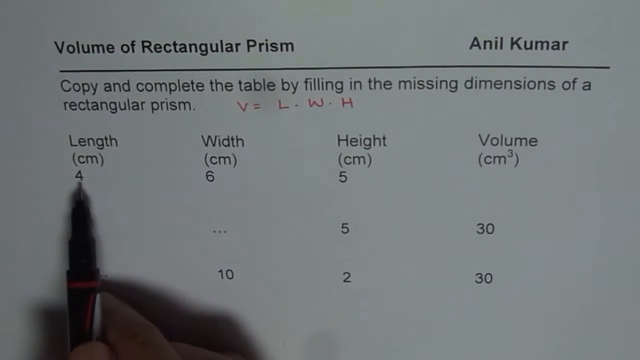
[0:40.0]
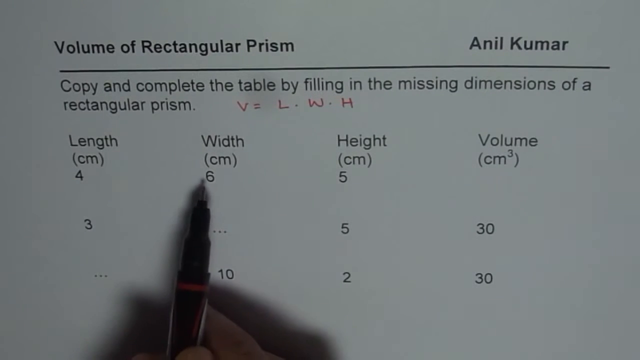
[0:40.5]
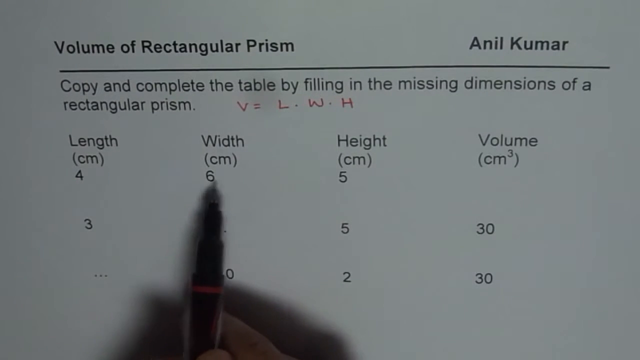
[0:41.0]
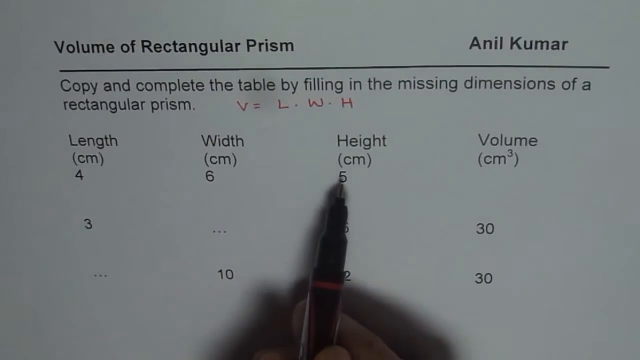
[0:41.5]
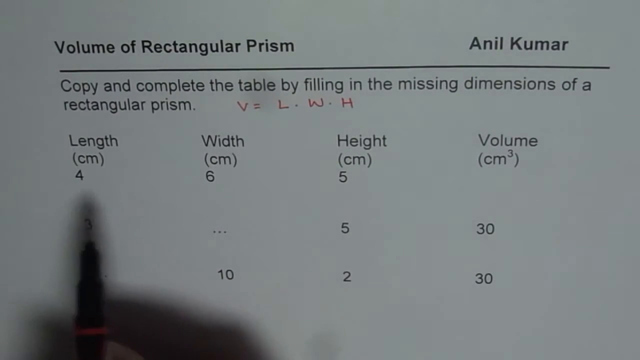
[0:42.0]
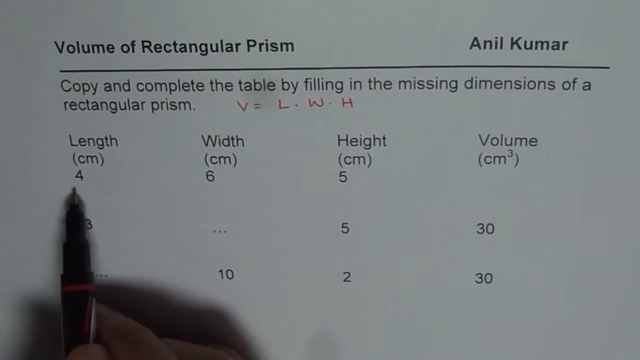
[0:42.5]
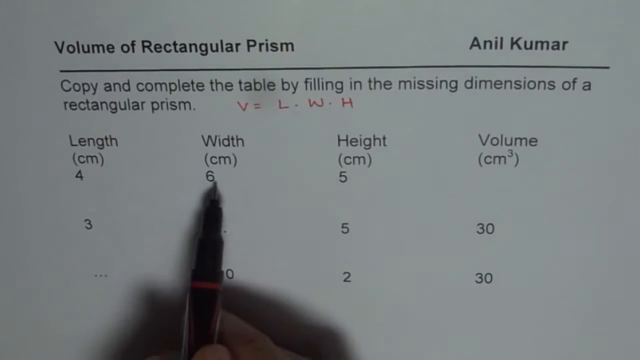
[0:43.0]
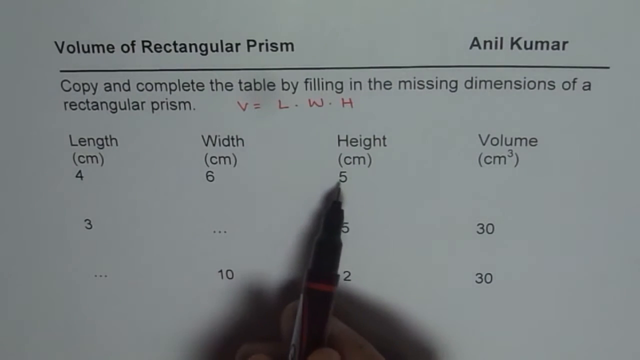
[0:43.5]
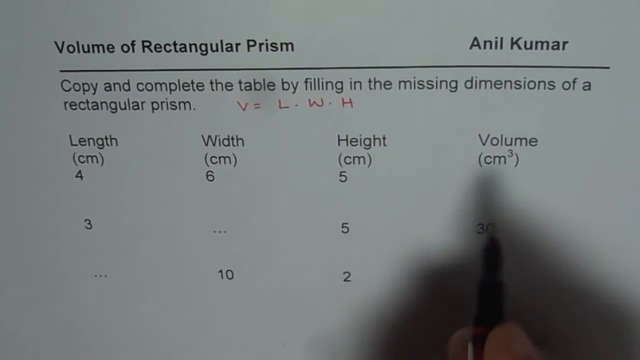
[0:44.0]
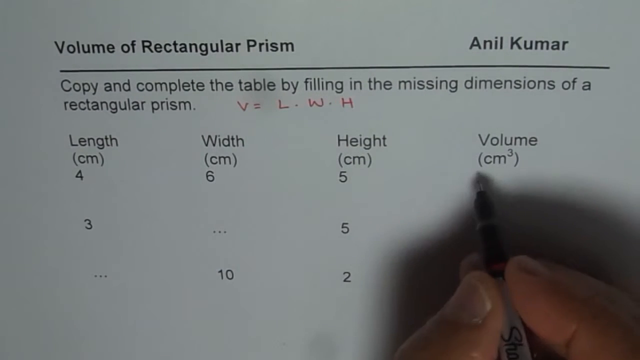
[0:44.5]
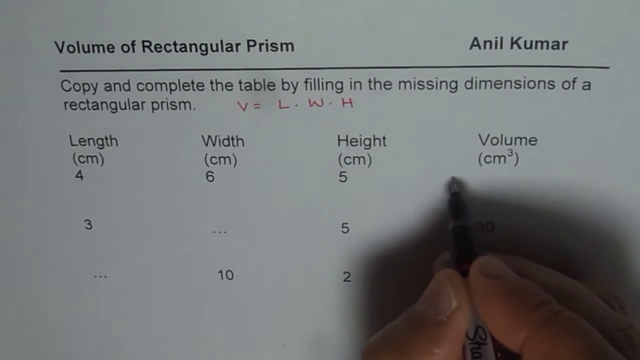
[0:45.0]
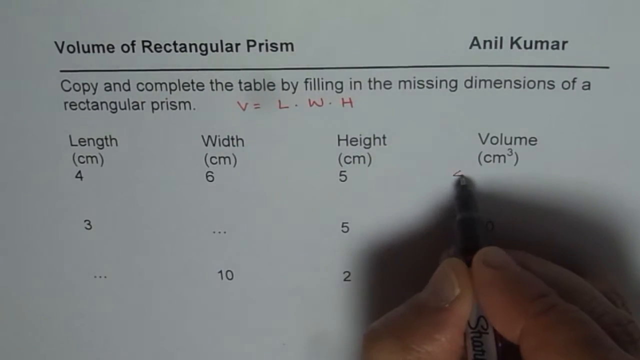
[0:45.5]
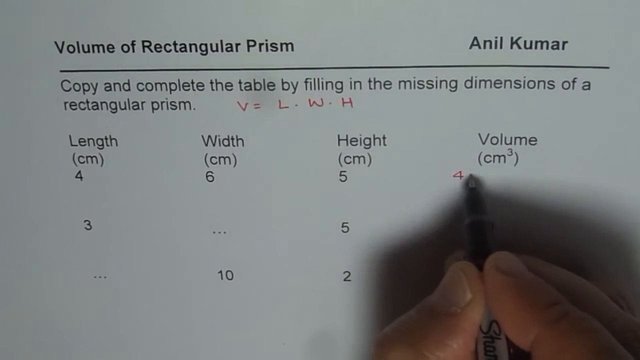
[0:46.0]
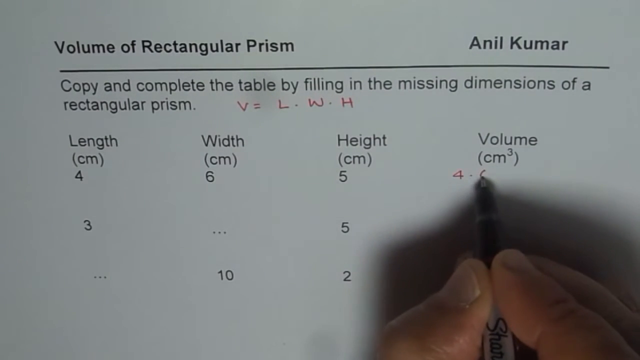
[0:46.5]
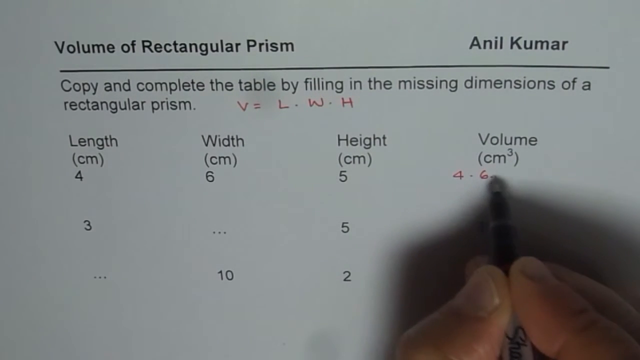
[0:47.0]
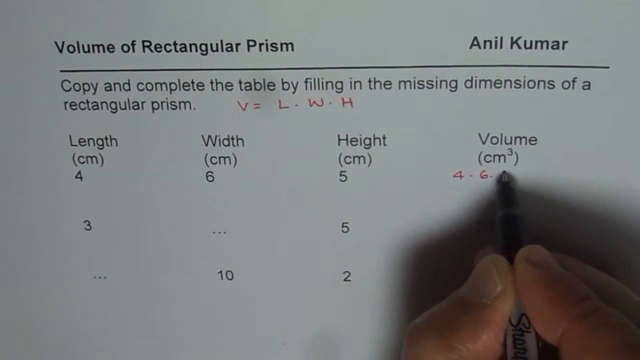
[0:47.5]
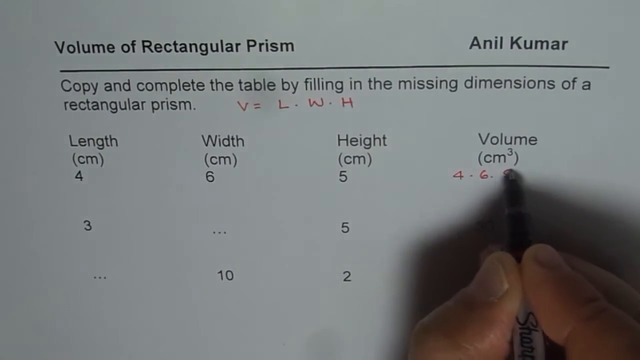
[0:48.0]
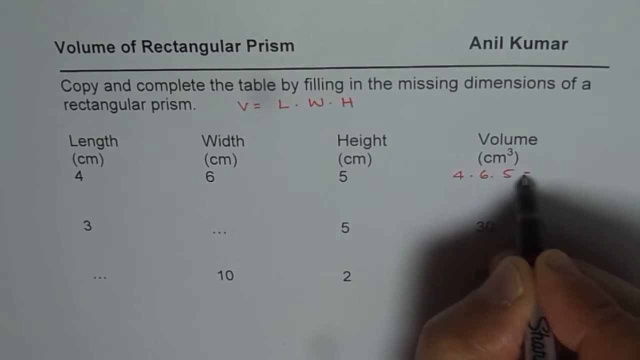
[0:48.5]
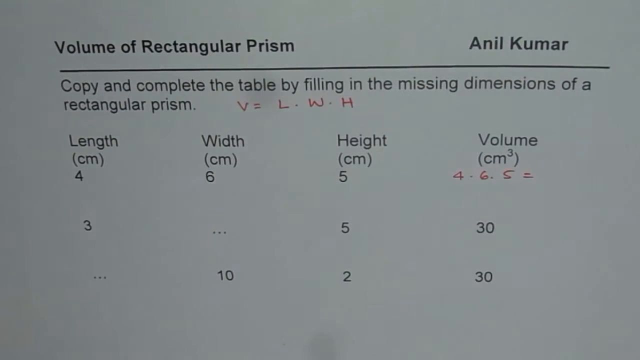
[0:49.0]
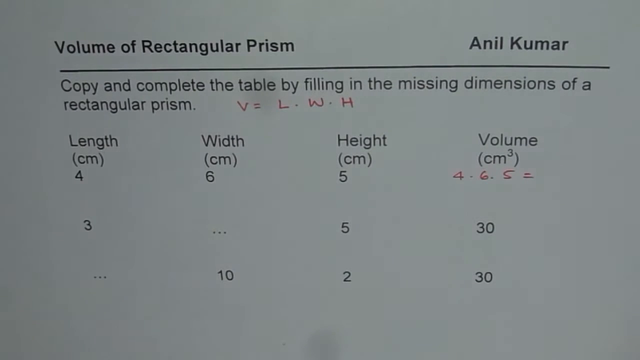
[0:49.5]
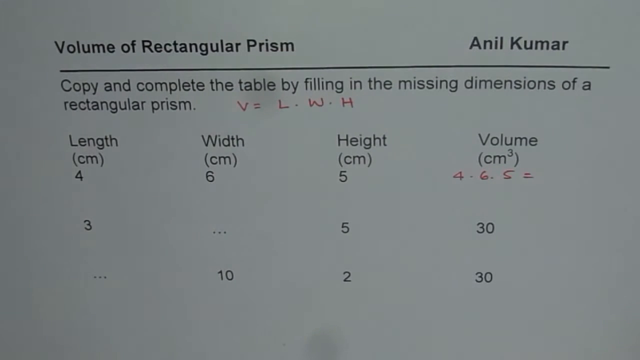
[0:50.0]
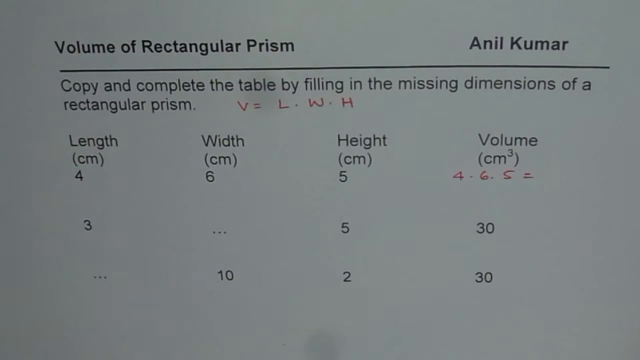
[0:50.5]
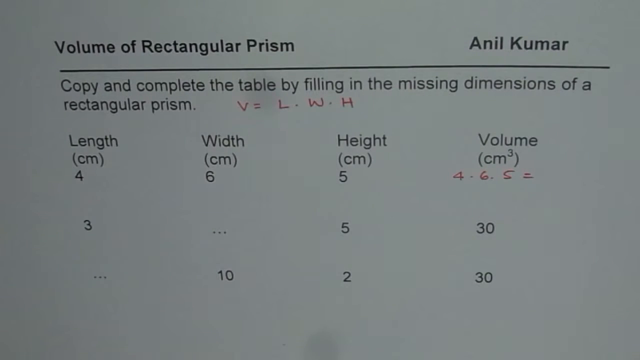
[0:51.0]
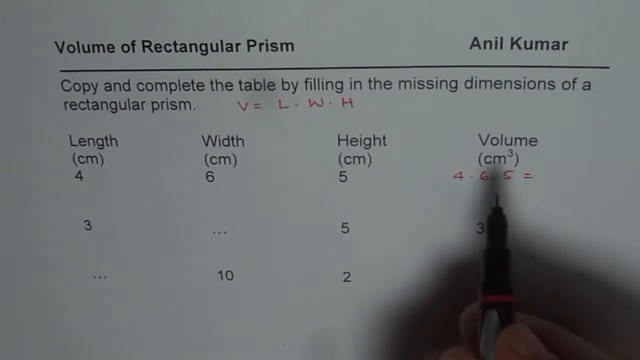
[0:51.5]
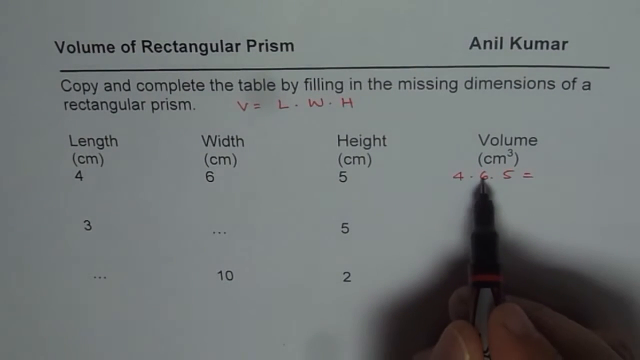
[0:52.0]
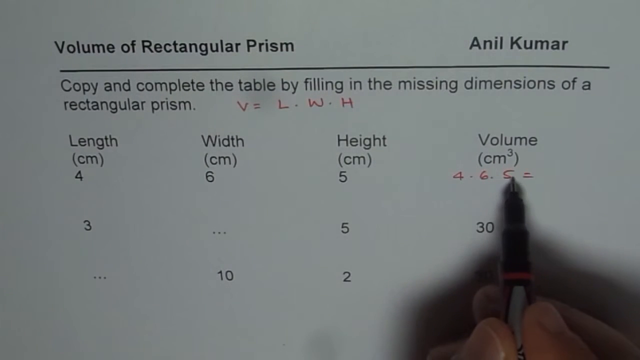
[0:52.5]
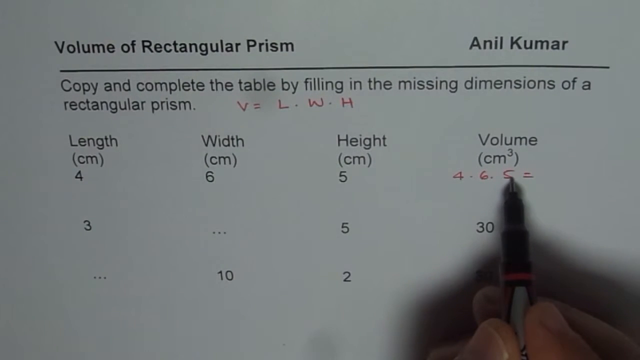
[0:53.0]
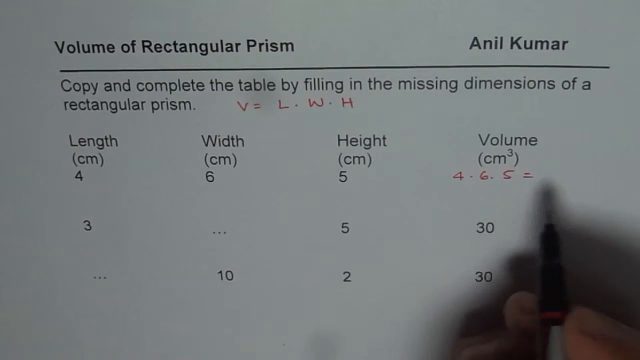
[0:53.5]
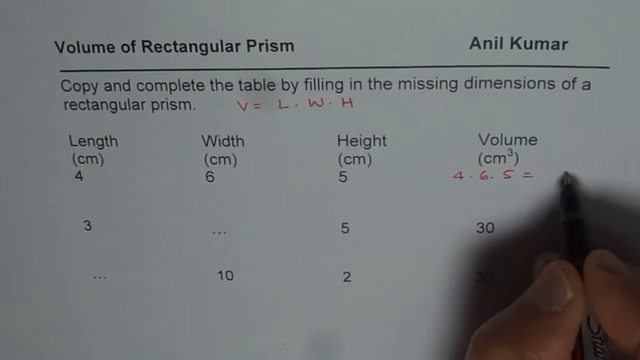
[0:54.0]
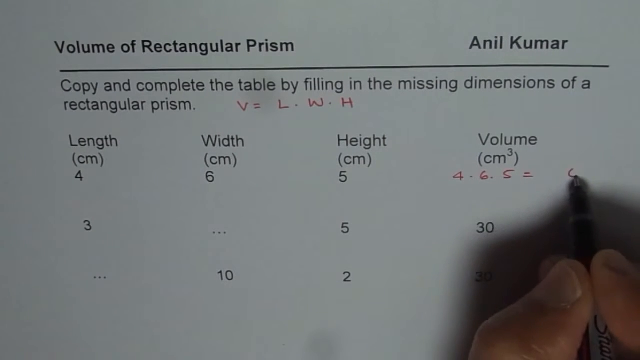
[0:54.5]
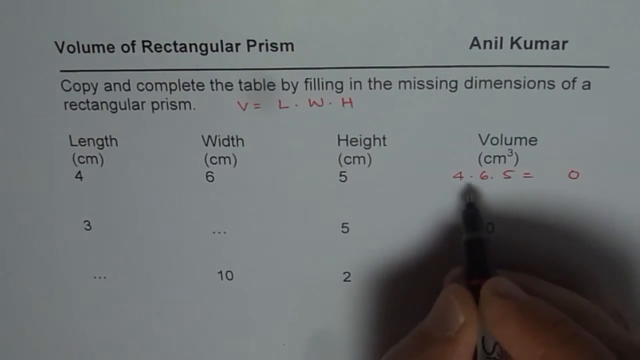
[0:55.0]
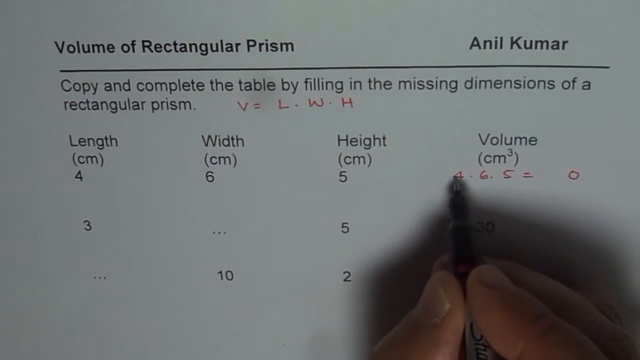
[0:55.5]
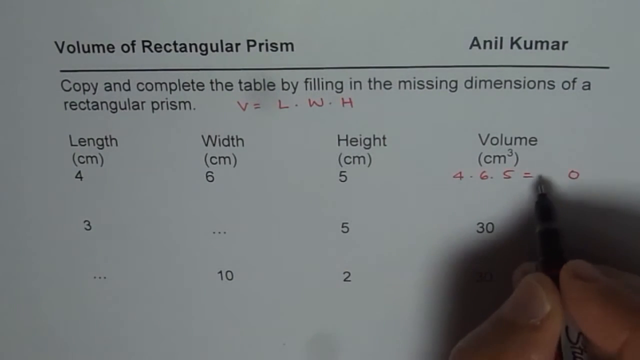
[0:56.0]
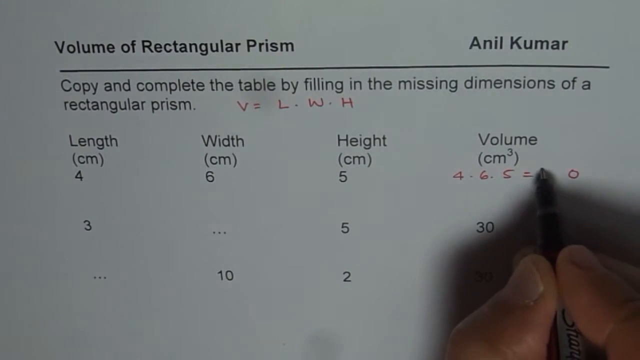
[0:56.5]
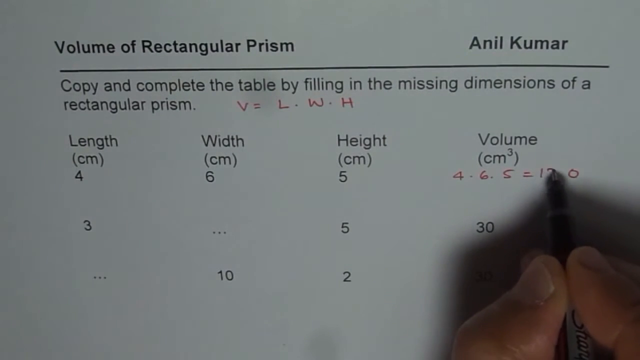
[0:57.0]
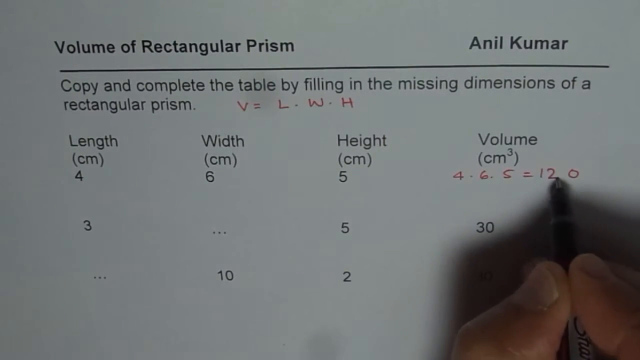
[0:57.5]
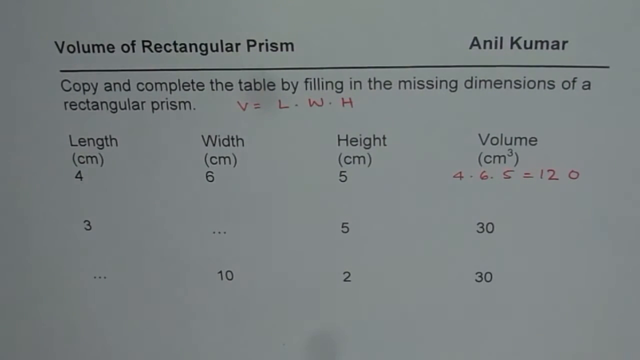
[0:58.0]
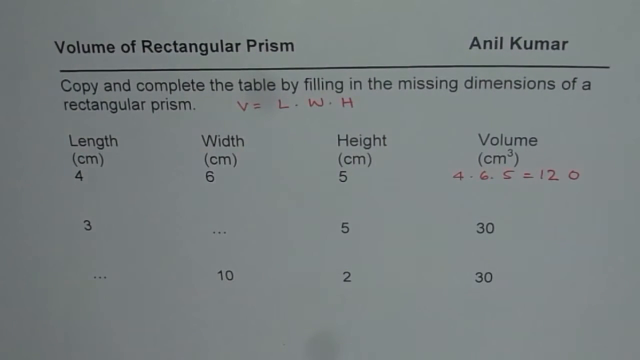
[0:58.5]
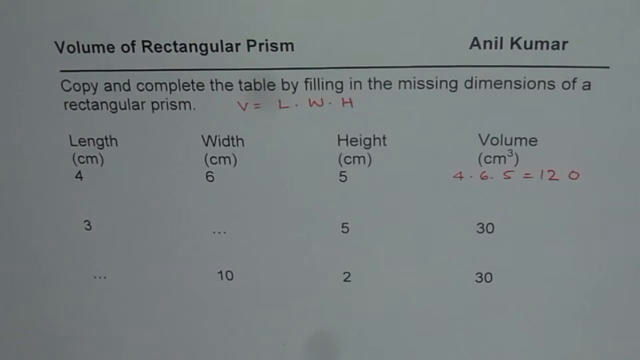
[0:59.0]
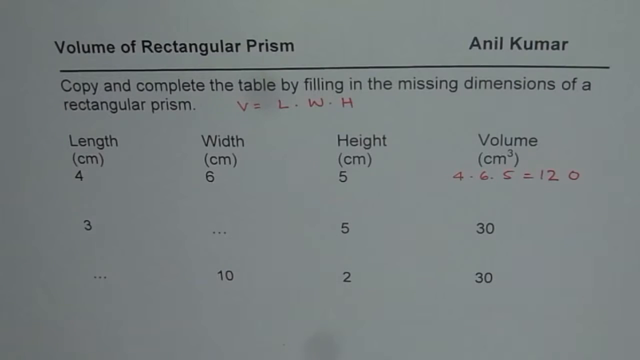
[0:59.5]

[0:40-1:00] The person's hand is in the bottom left corner, with the pen touching underneath the 4 in the length column, the first column. They tap the 4 with the pen, then the 6, then the 5. They go back across the length, width, and height columns, tapping the 4 in the length column, the 6 in the width column, and the 5 in the height column. They move their hand over, and their fingers are more noticeable in the bottom right corner as they move the hand up. Under the volume column they write "4 · 6 · 5 =", with a dot between each of the numbers. They remove their hand from view for a few seconds, then bring it back and tap the 6 and the 5 they just wrote. They hover over the 5 for a second or so before moving to the right side of the equal sign and placing a zero.